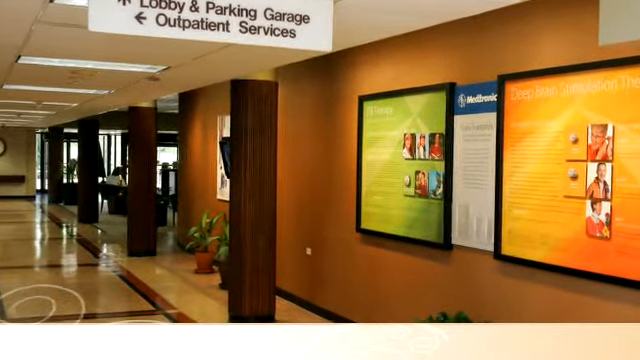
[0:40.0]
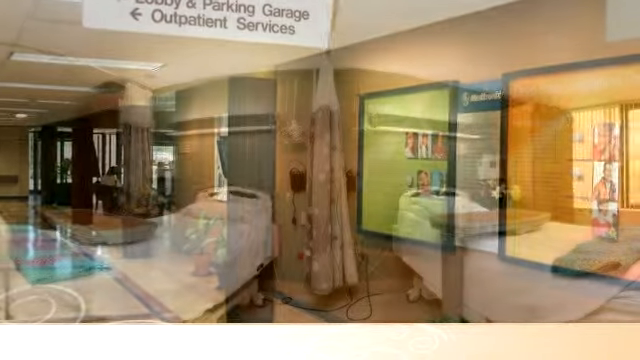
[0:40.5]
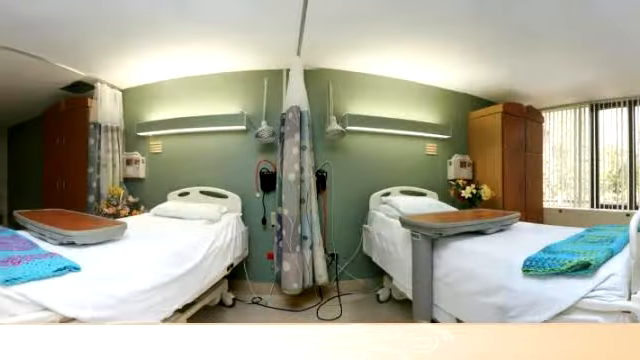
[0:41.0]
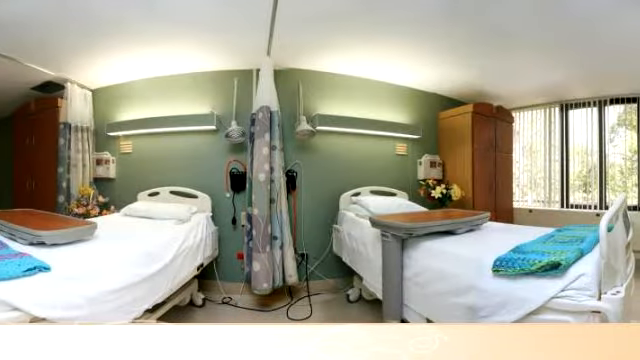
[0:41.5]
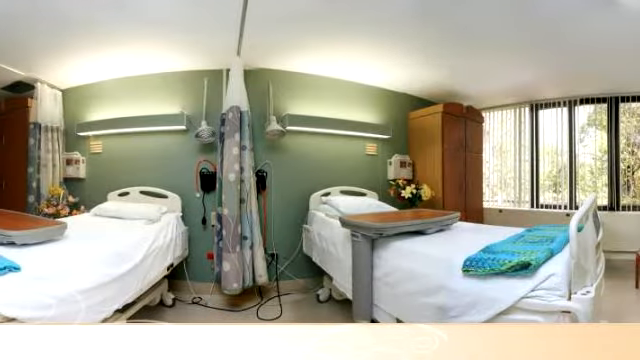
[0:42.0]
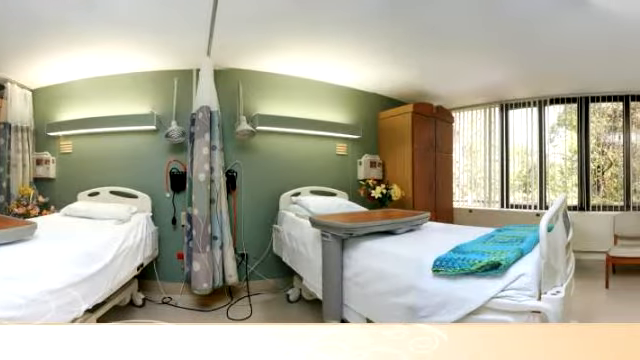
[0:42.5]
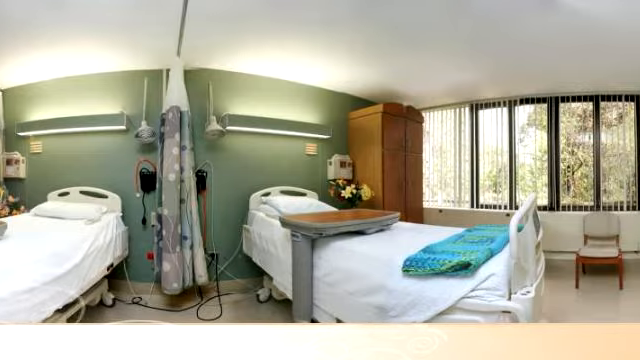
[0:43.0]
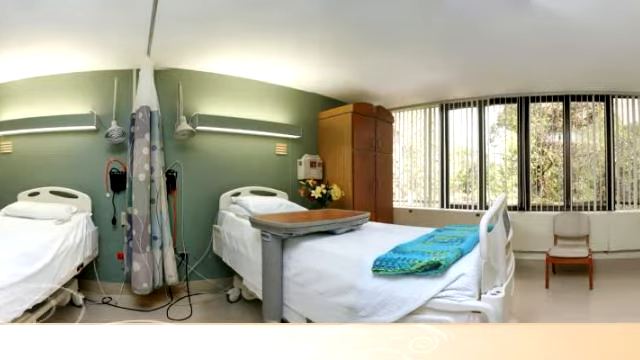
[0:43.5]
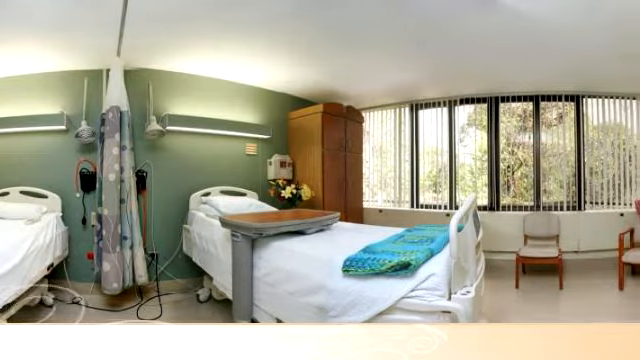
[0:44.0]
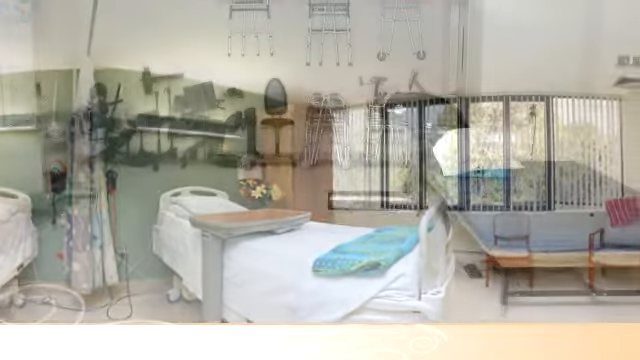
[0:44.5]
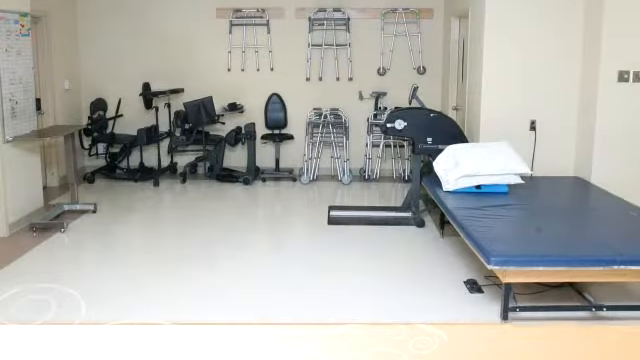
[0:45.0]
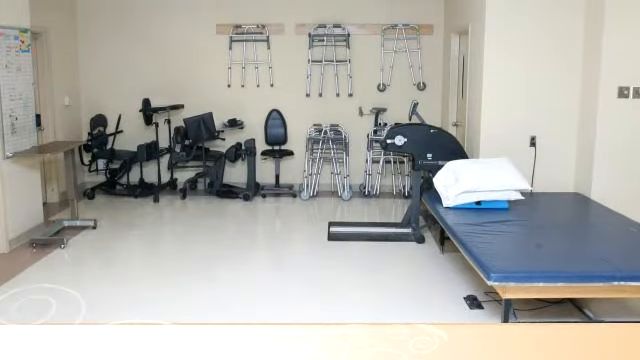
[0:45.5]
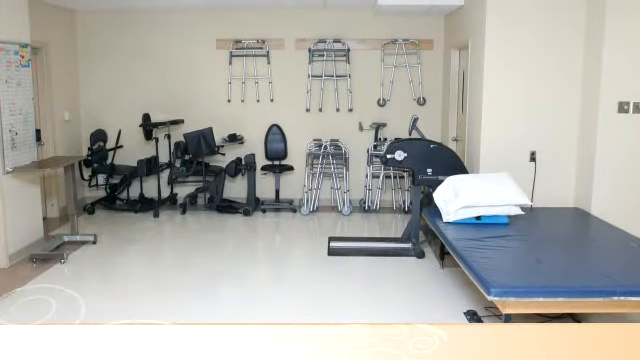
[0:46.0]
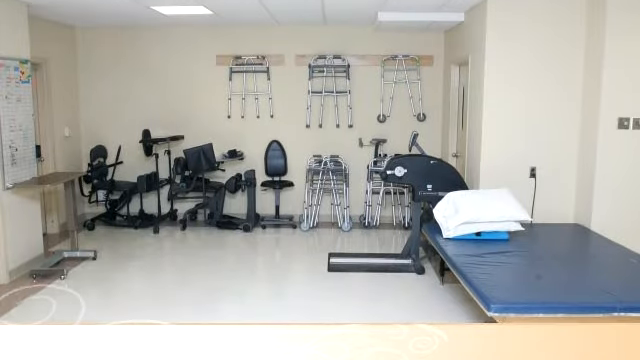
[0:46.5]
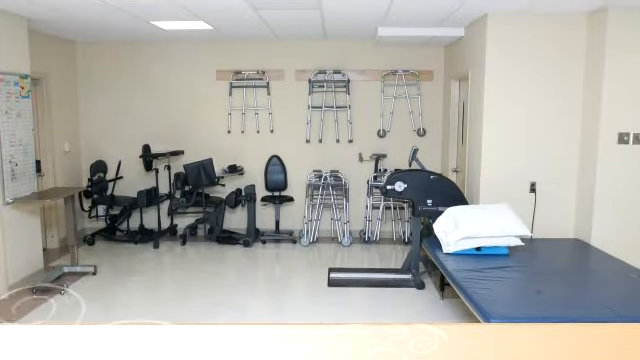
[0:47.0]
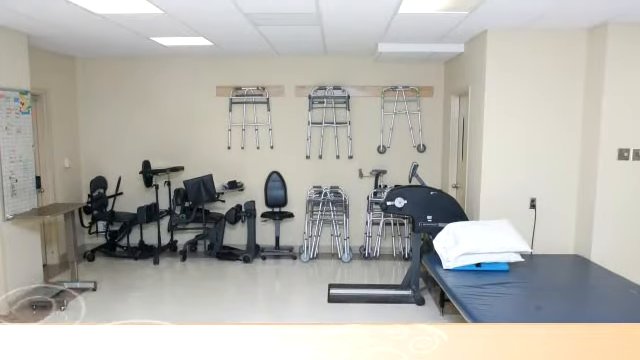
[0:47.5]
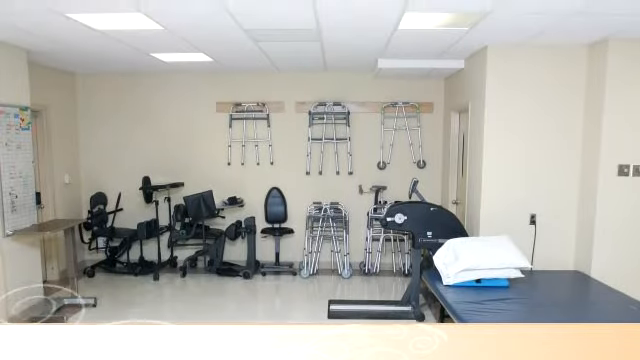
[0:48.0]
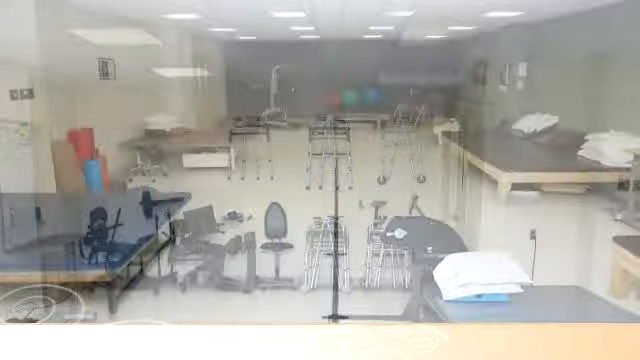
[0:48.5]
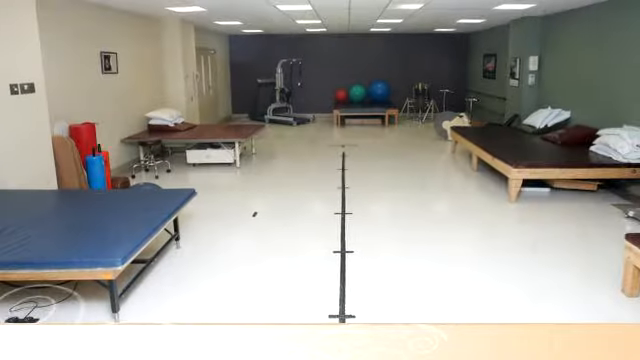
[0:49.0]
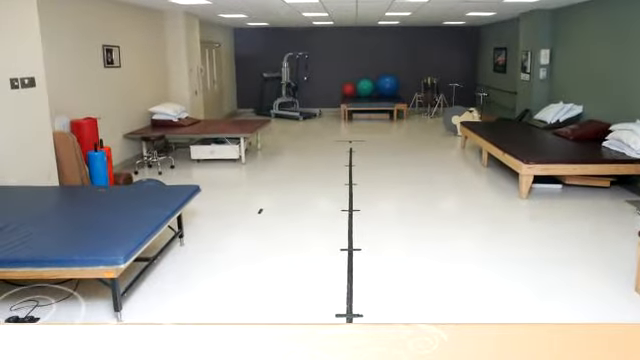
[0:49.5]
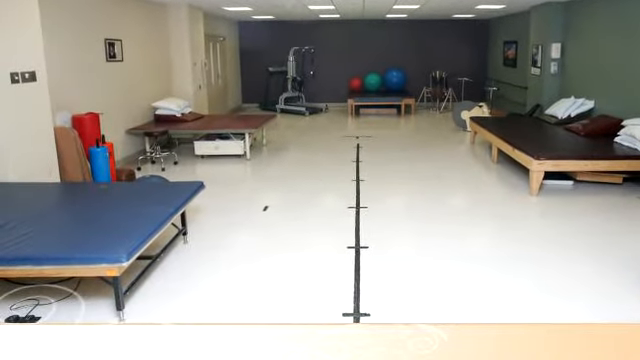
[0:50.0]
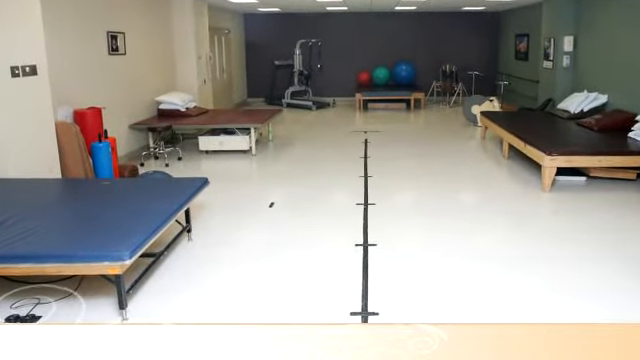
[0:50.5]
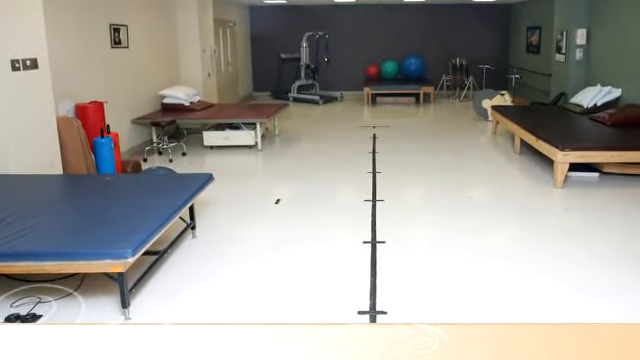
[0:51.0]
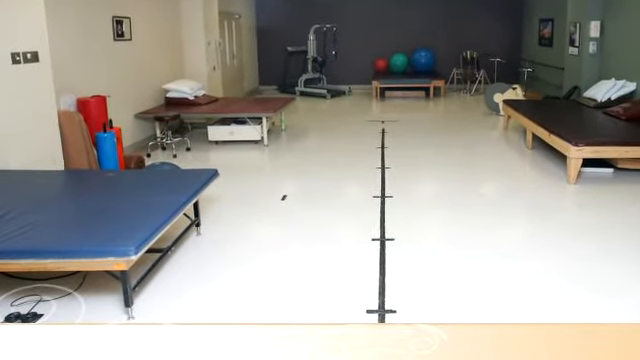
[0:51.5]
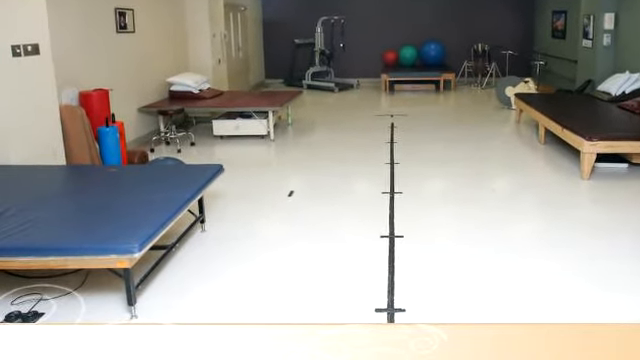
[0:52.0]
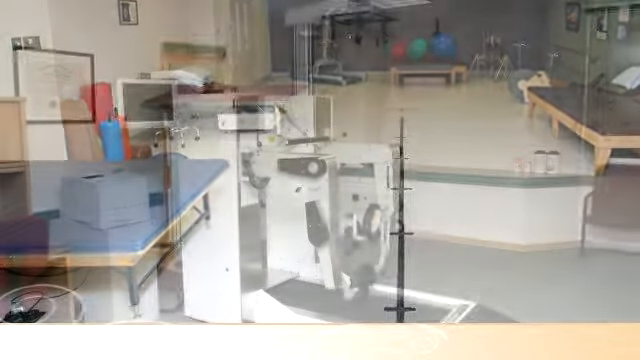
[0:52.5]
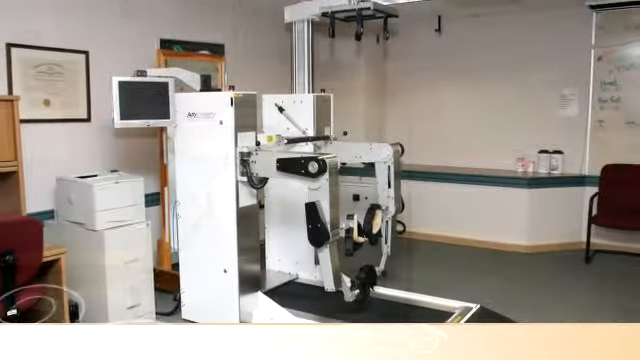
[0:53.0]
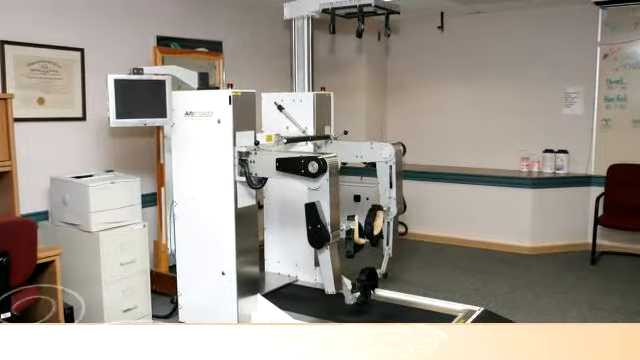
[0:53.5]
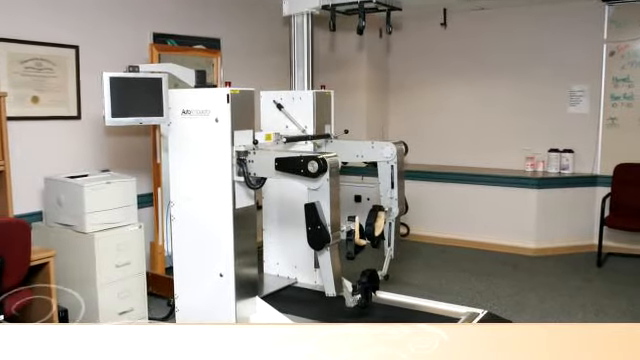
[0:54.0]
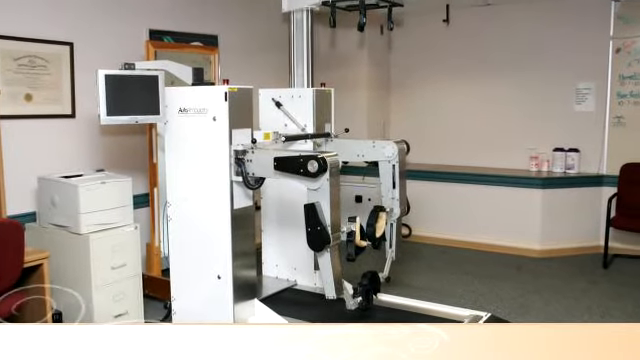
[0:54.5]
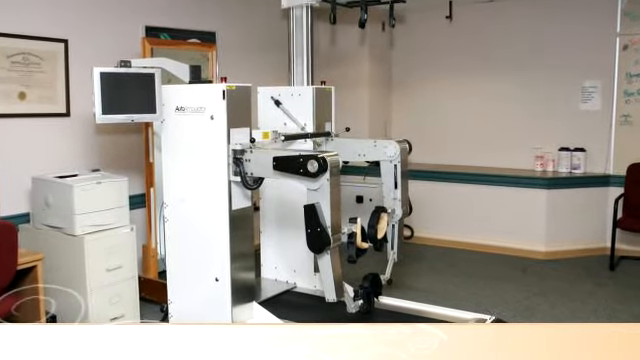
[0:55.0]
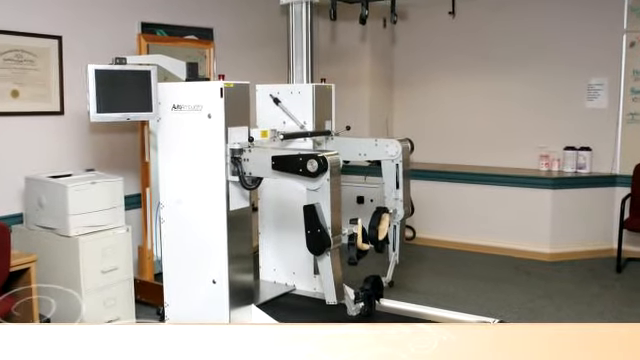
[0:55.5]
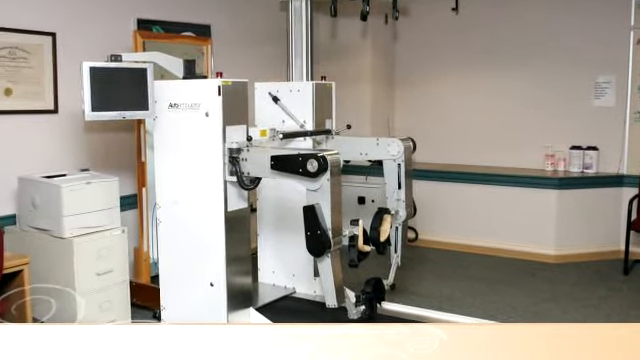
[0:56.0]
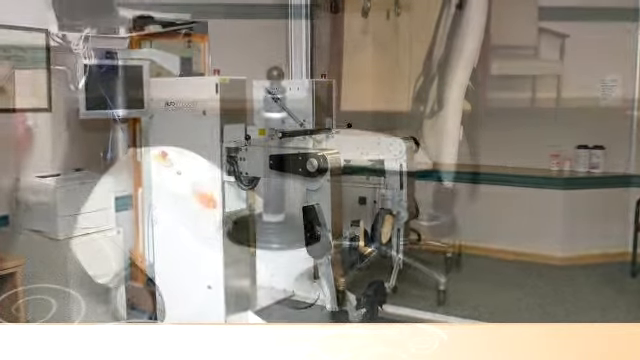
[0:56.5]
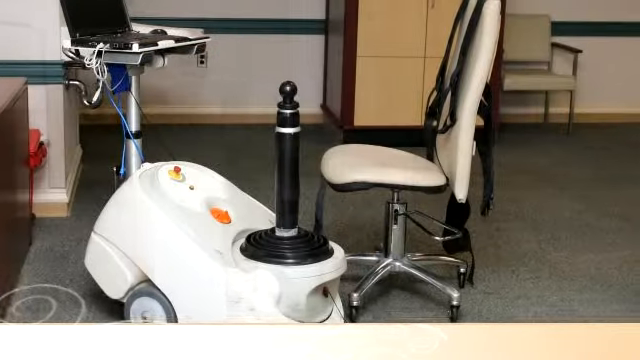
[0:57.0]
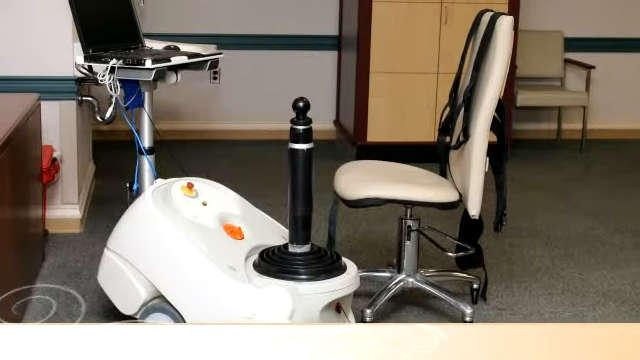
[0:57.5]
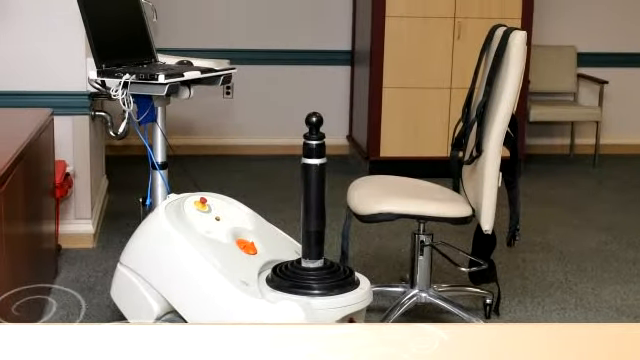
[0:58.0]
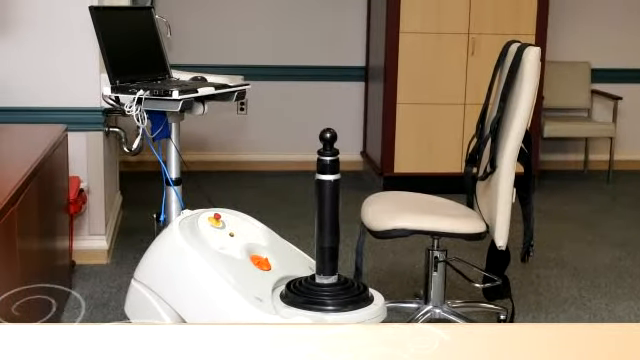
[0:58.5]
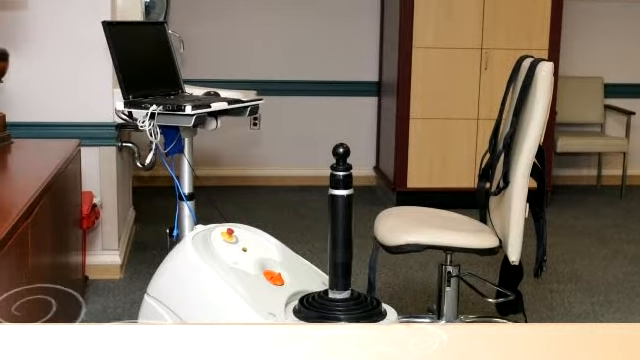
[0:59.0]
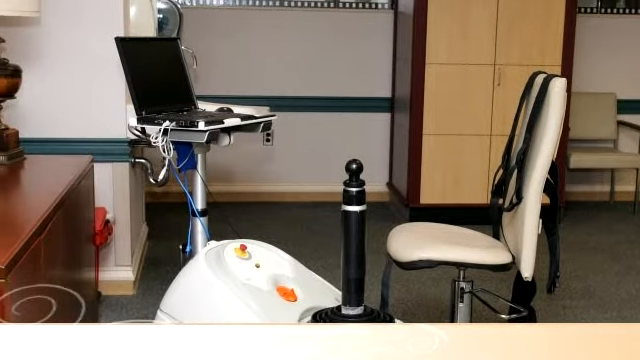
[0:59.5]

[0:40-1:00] The wall with the large-scale medical posters is still shown. The video then cuts back to another view of the rooms, panning from left to right: a room for two with a divider down the center, large wardrobes on each side, and seating and chairs, with one bed towards the window. The windows are almost floor-to-ceiling, and trees and other greenery are visible outside. The pan goes all the way to the right. The video then cuts to what looks like a physical therapy room. Multiple walkers hang on the wall, and there are free weights, chairs, and a large table with a padded mat and pillows on top, as though prepared for the next person. Whiteboards and other items for tracking information are on the wall. The camera pulls and pans up on this photo before zooming in on more features of the room, showing multiple areas where patients lie and receive therapy on large padded, low, almost daybed-style tables. The camera pans all the way in, then pulls out to the next shot, which shows more of the facility and its medical equipment; most of it looks a bit older but well-maintained. Pulling back out, it shows some sort of device meant to gauge things, with a laptop and a therapeutic device next to it.